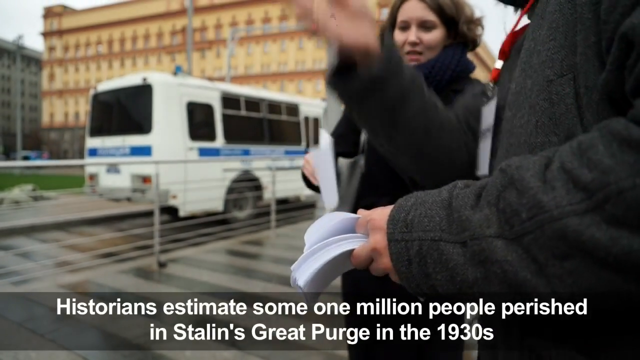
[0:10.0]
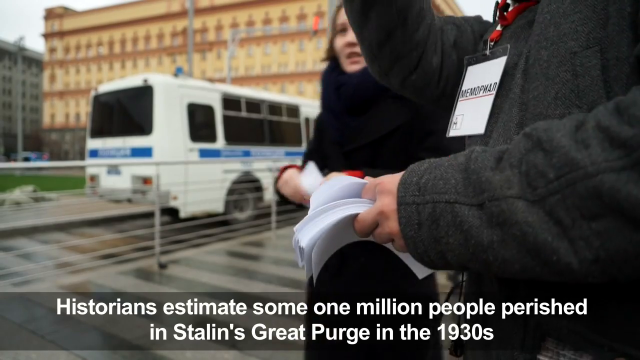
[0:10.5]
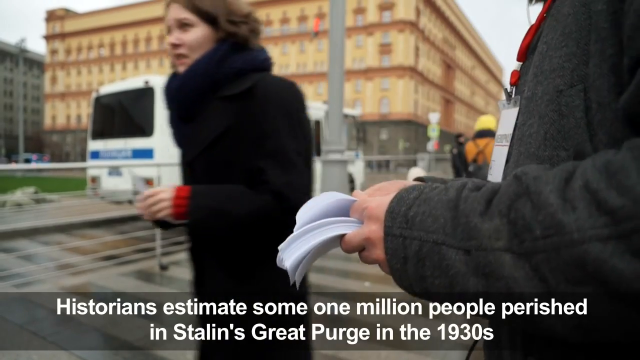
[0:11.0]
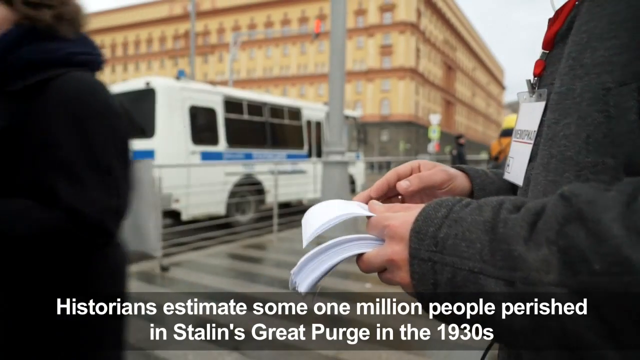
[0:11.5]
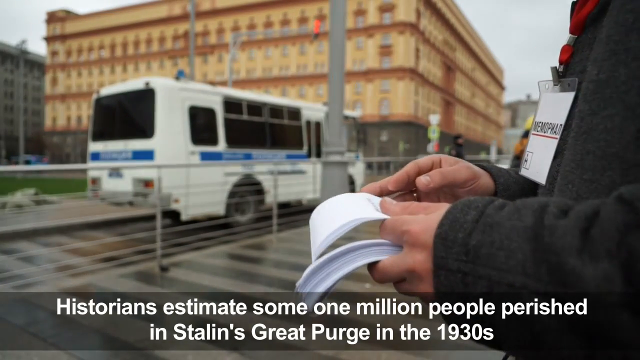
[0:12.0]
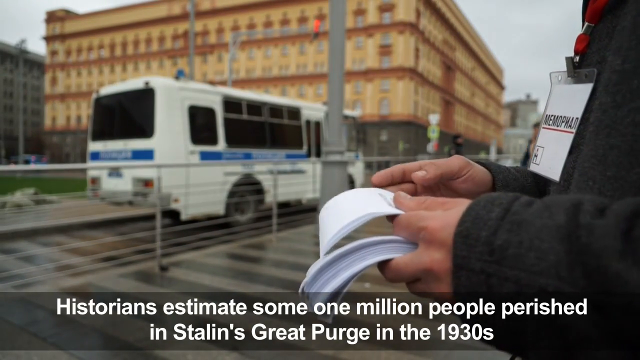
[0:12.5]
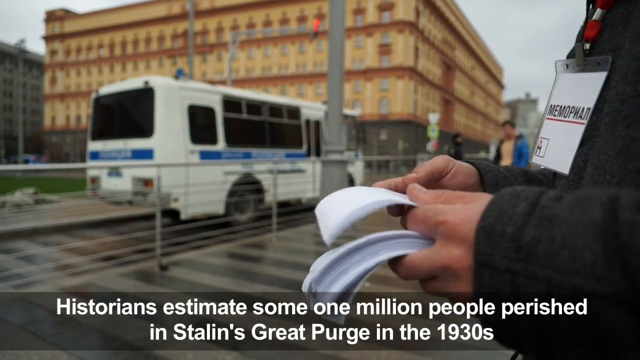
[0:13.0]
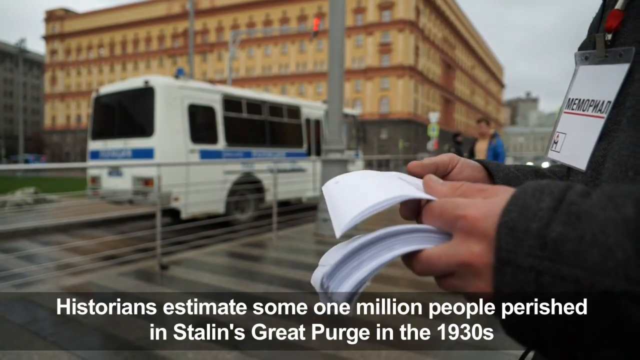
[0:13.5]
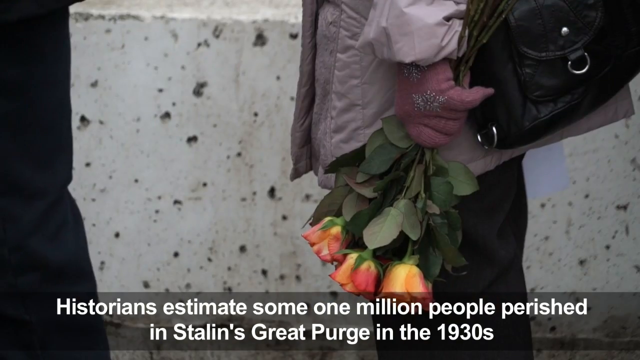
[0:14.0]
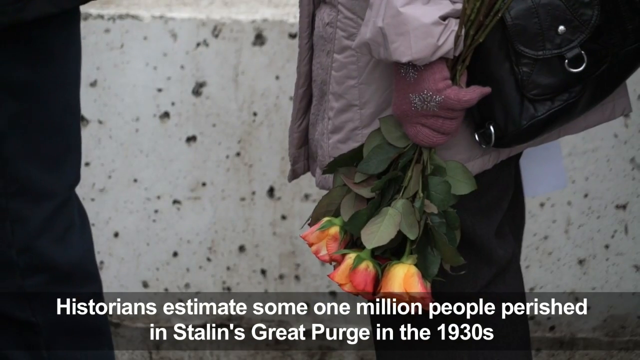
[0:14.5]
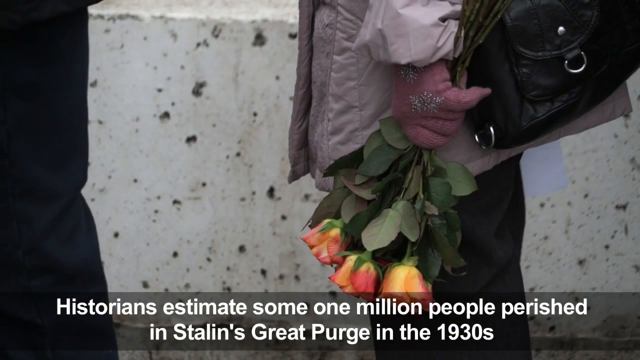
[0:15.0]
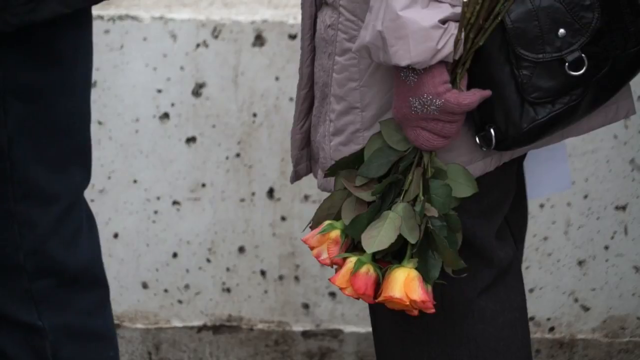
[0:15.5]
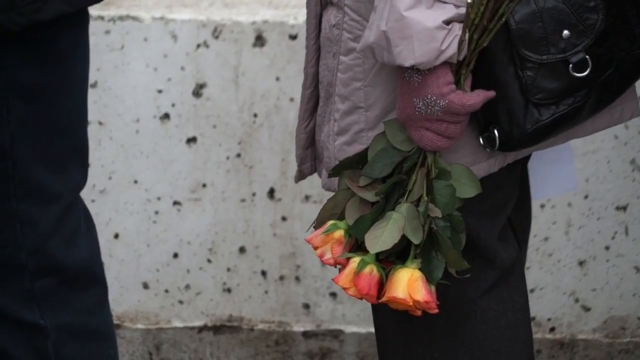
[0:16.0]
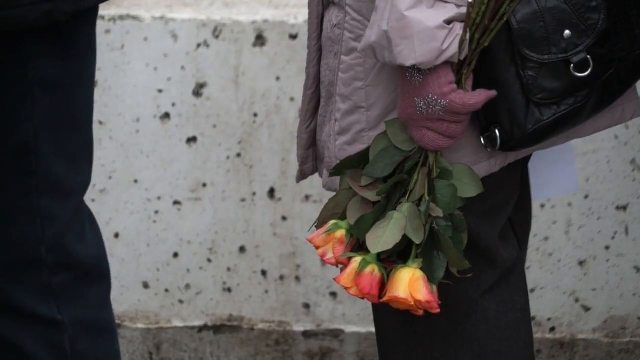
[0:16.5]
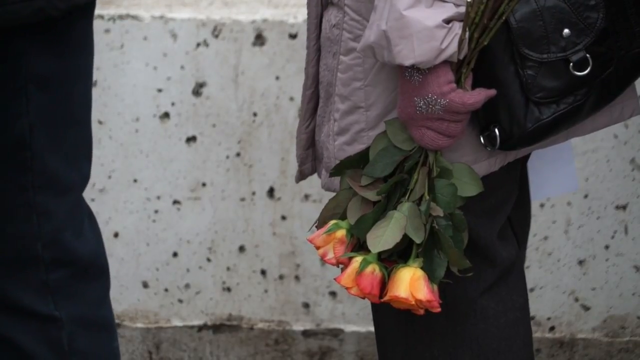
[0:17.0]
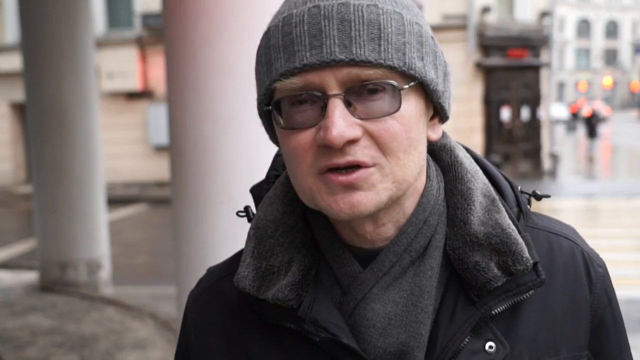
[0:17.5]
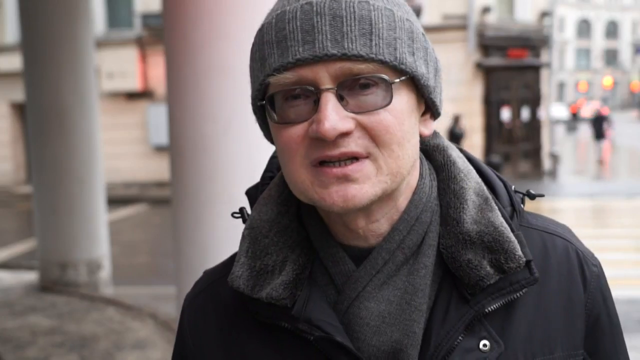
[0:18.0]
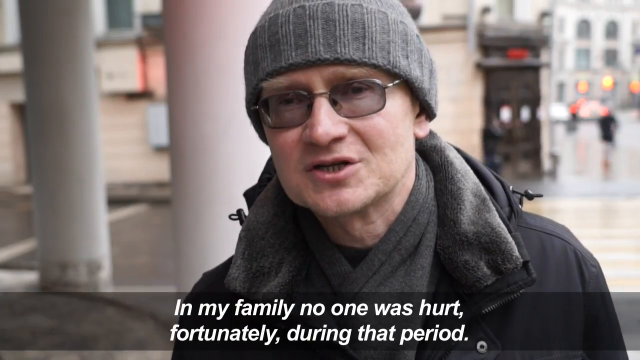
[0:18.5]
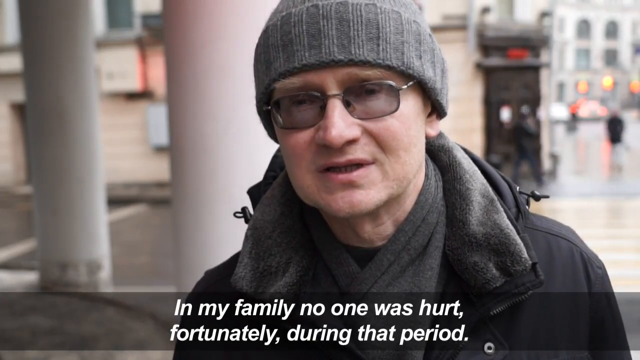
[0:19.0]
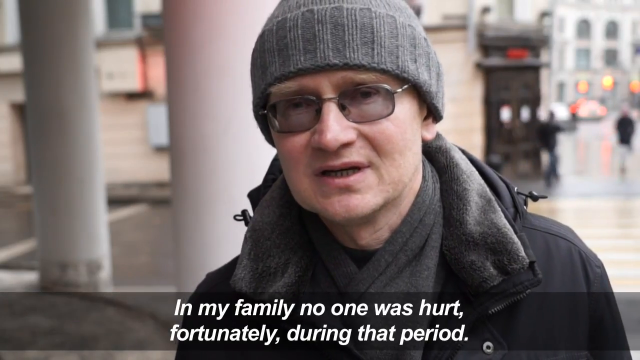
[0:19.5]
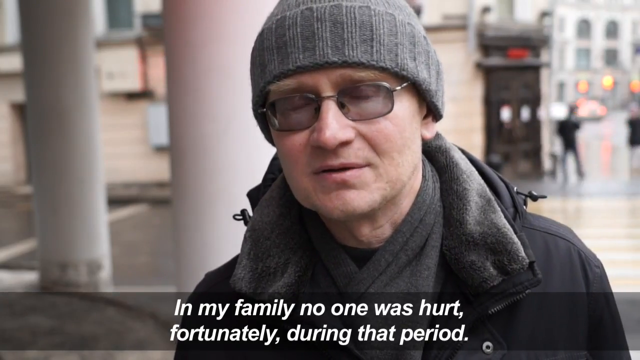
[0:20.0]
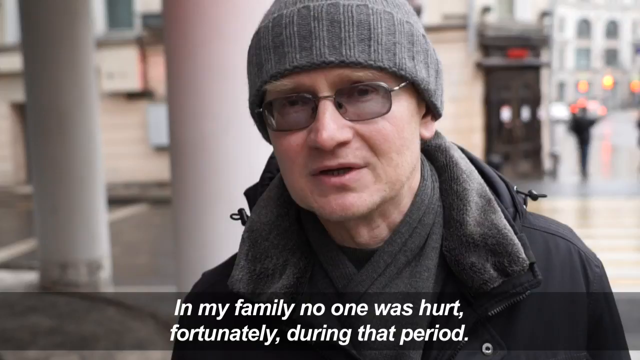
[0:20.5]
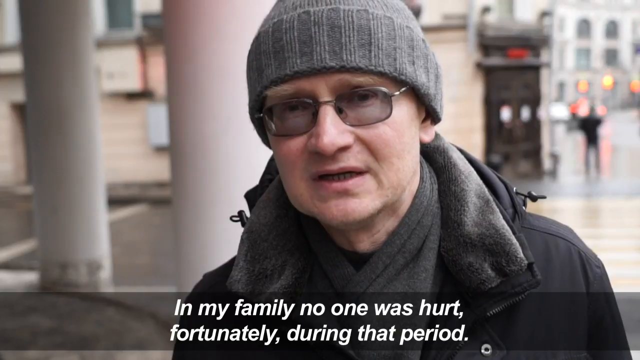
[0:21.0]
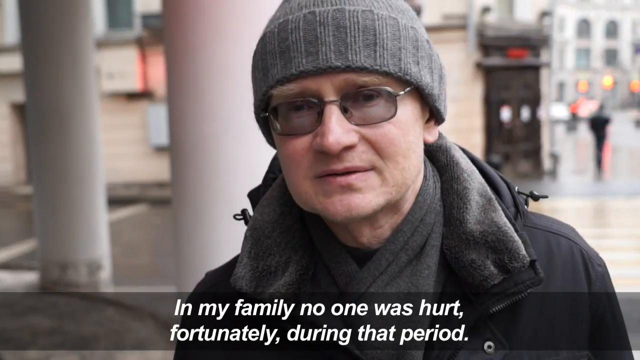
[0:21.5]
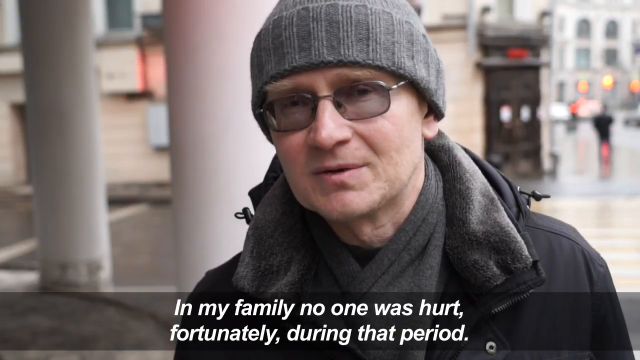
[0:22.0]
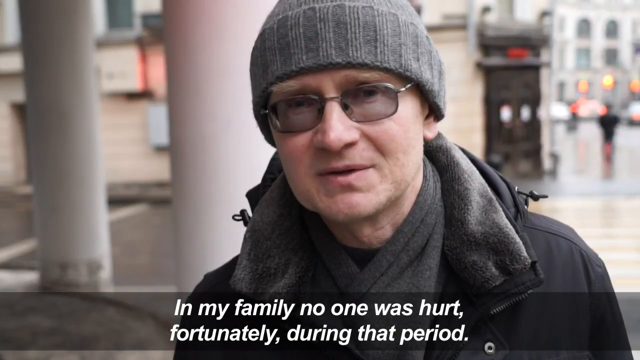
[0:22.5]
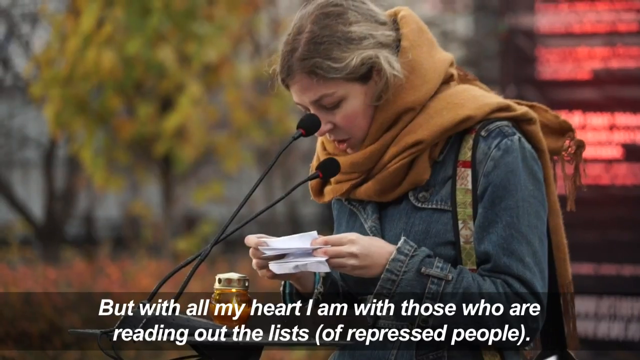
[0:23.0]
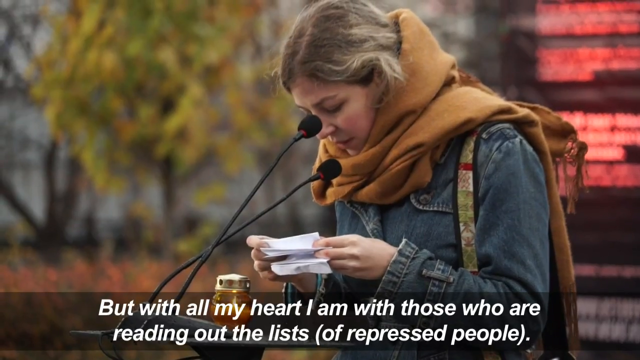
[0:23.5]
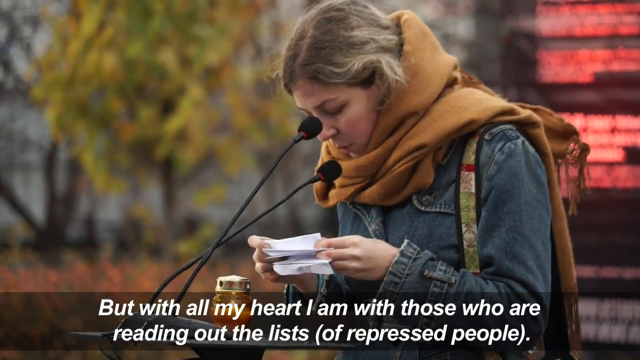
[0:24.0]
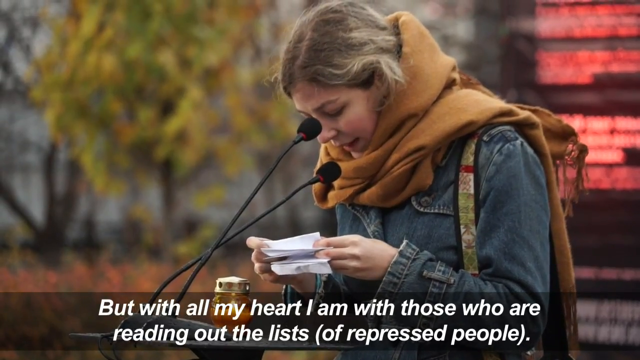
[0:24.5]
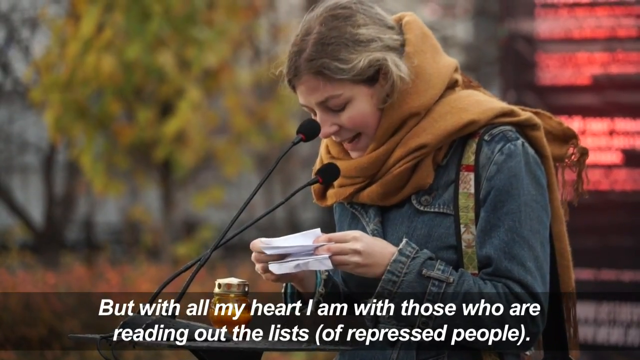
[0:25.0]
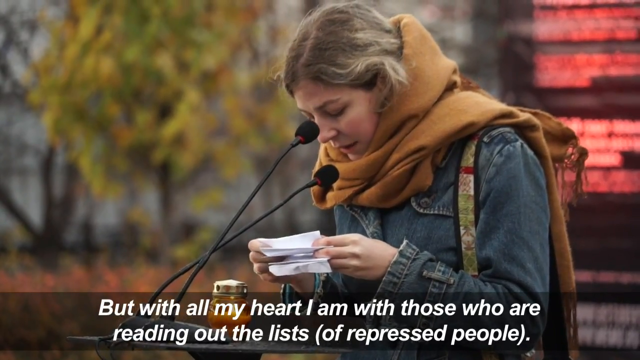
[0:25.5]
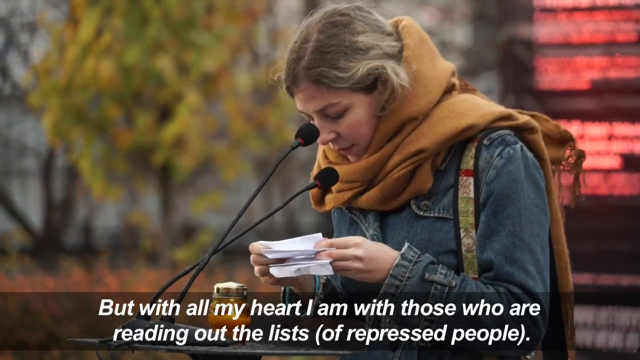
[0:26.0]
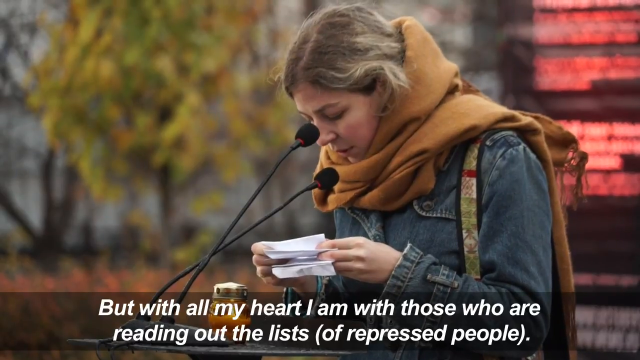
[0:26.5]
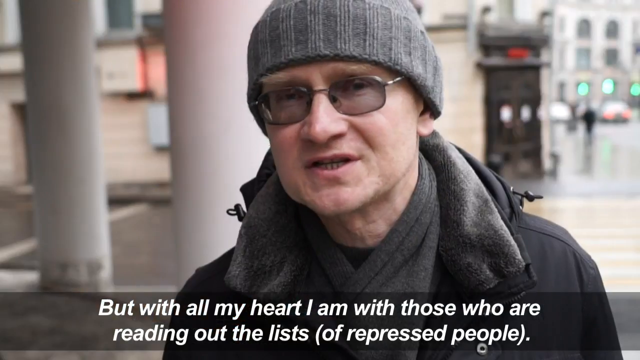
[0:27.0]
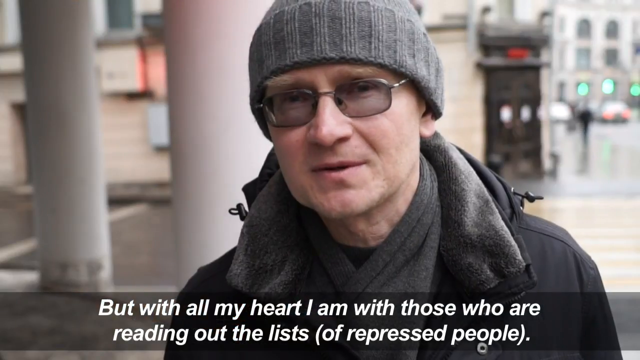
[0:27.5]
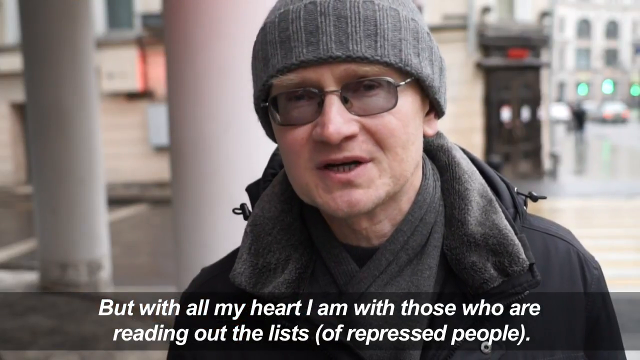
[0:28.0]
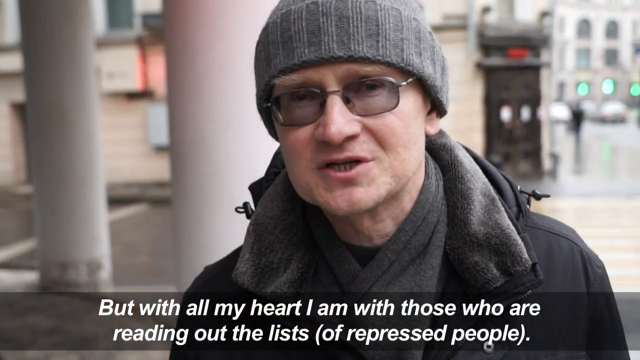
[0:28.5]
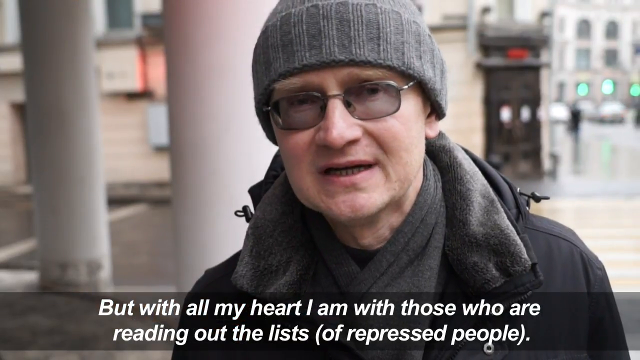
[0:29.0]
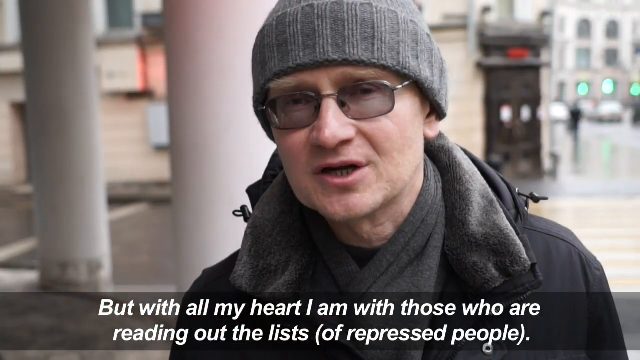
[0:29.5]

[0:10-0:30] The young woman takes the white piece of paper, and white text on the screen reads "historians estimate some 1 million people perished in Stalin's great purge in the 1930s." A woman is shown only from her stomach down to her knees: she wears dark pants, a light gray or pale purple jacket and pink gloves with snowflakes on them, carries a black leather-like purse, and holds roses facing the ground. A man speaks to the camera, and the text reads "in my family, no one was hurt fortunately during that period. But with all my heart, I am with those who are reading out the lists of repressed people." A woman in a jean jacket and a burnt orange scarf reads names from a white piece of paper in front of two microphones. The shot returns to the man as he finishes his sentence.